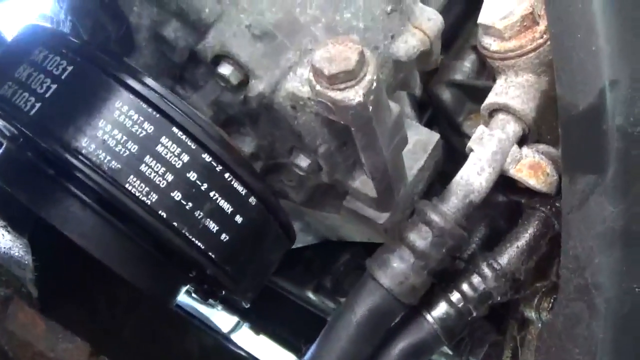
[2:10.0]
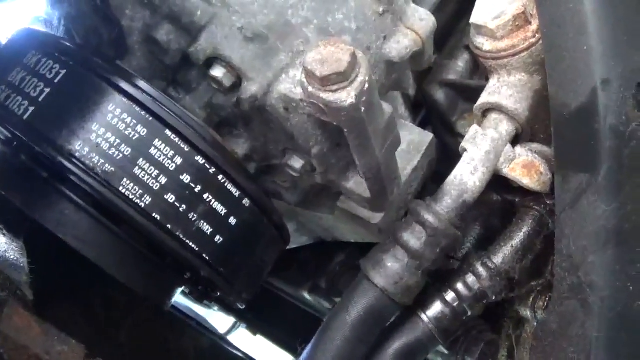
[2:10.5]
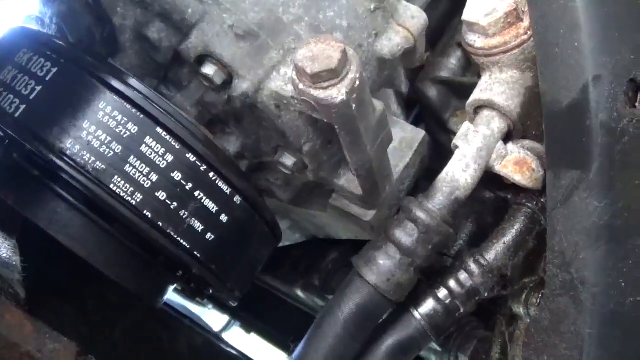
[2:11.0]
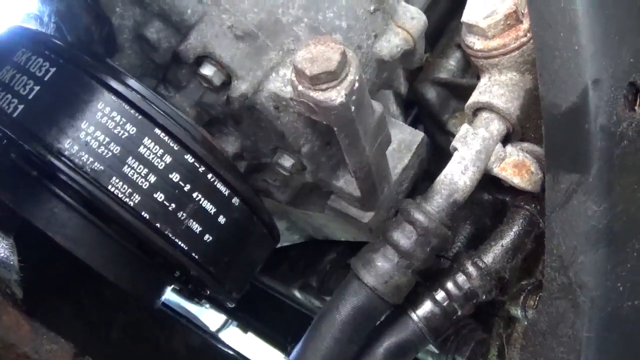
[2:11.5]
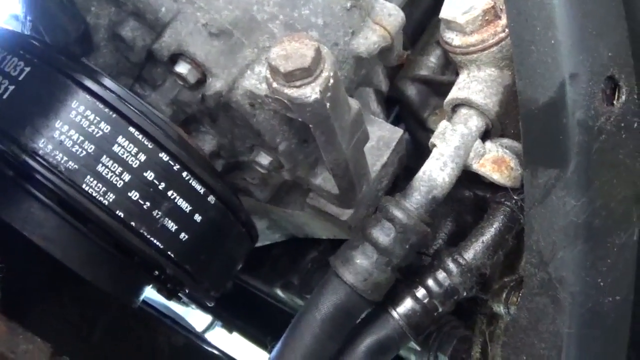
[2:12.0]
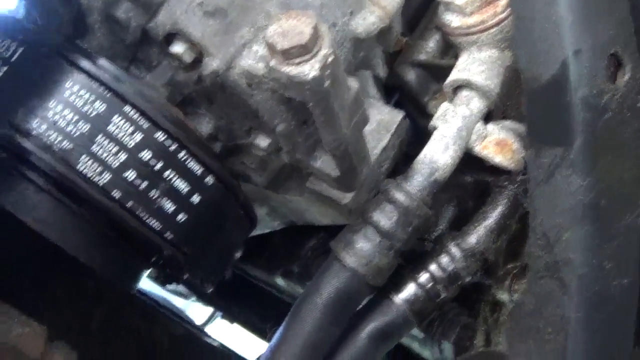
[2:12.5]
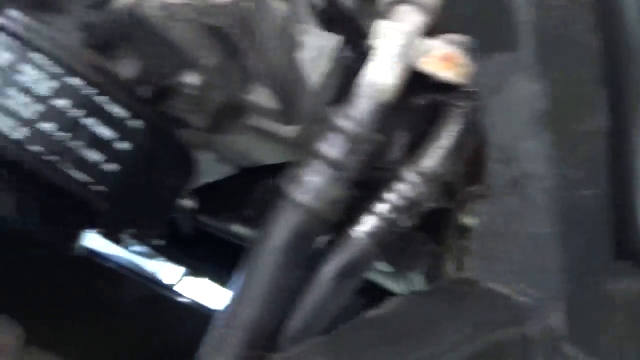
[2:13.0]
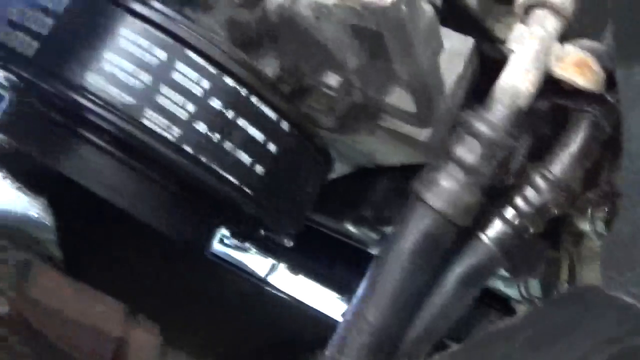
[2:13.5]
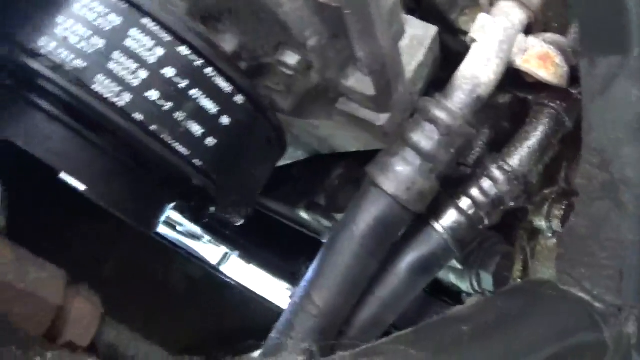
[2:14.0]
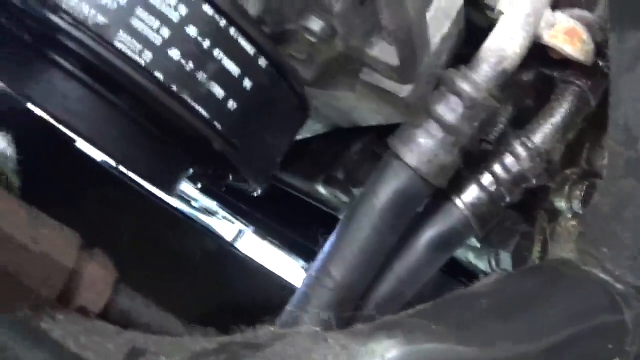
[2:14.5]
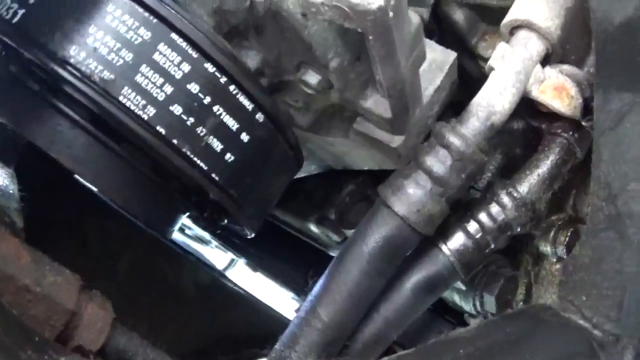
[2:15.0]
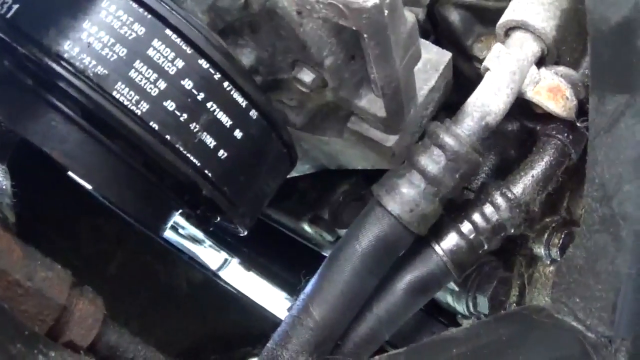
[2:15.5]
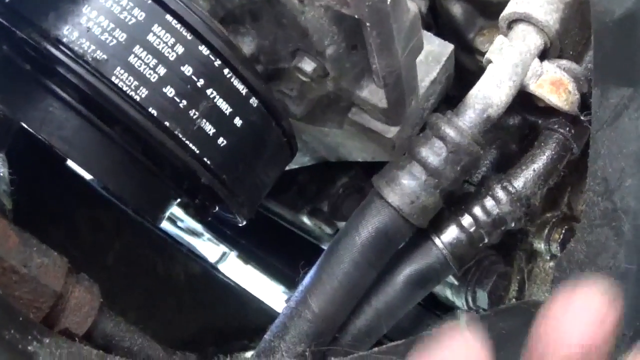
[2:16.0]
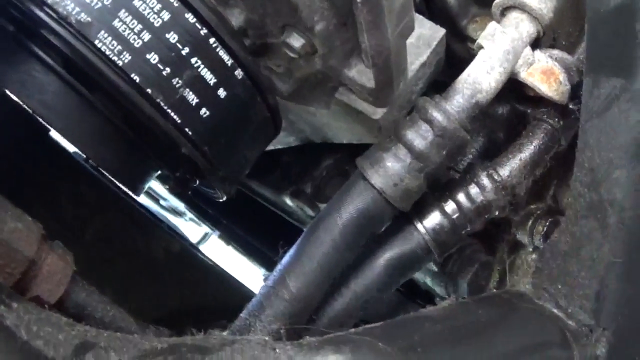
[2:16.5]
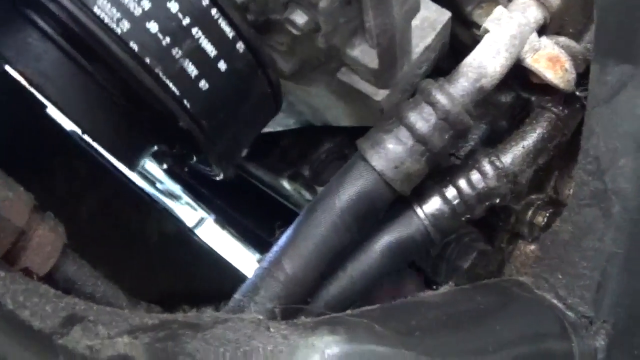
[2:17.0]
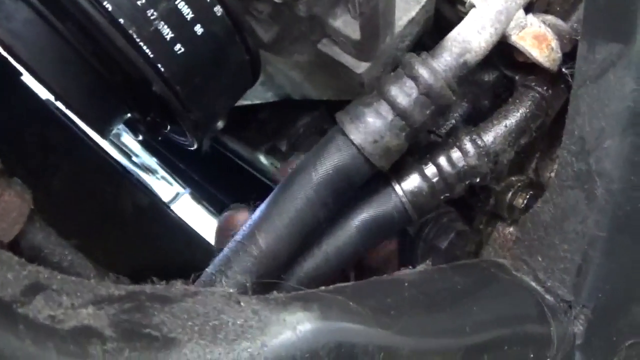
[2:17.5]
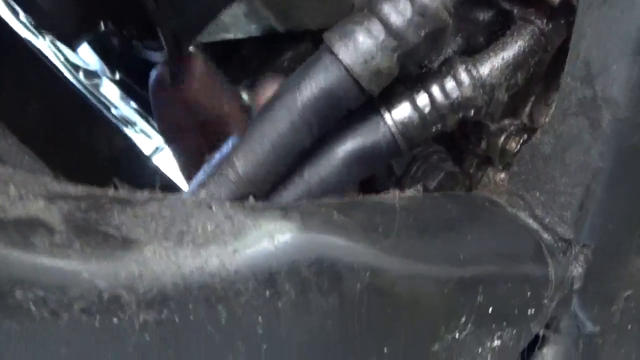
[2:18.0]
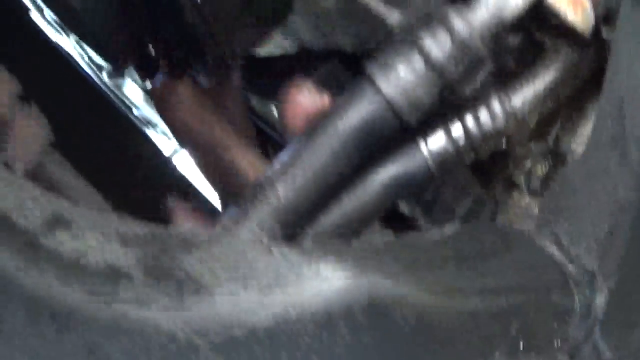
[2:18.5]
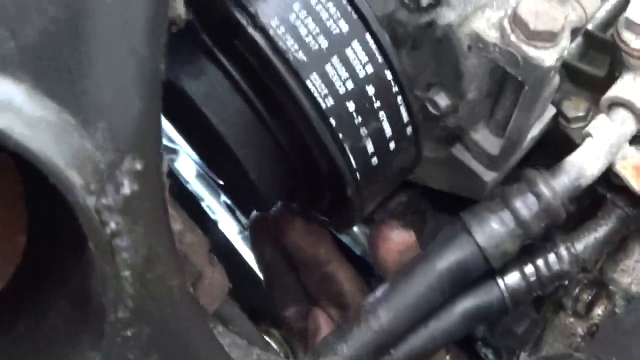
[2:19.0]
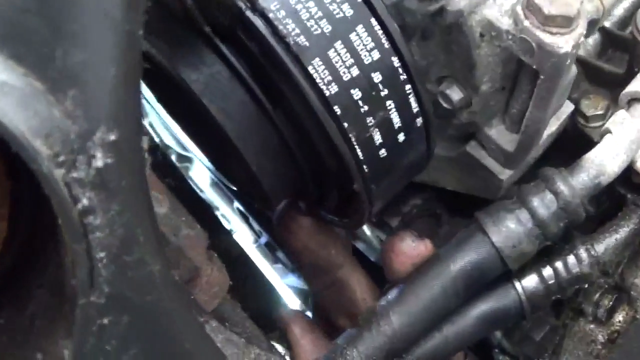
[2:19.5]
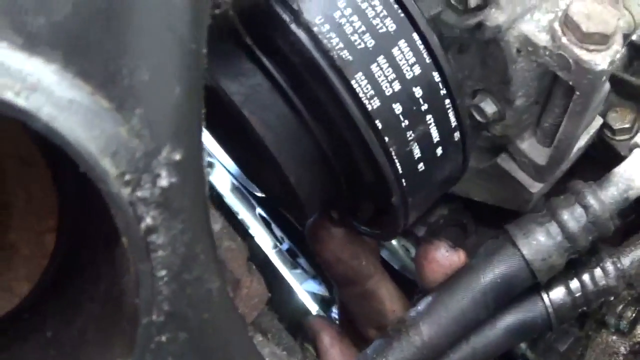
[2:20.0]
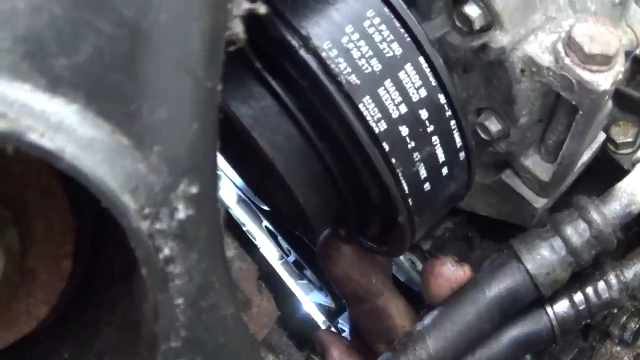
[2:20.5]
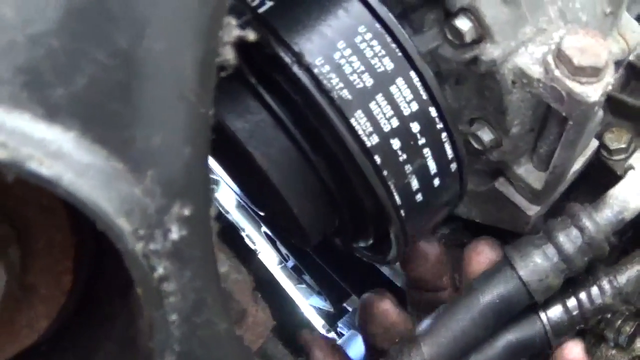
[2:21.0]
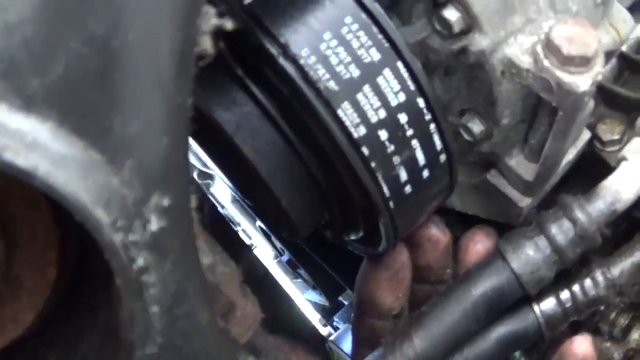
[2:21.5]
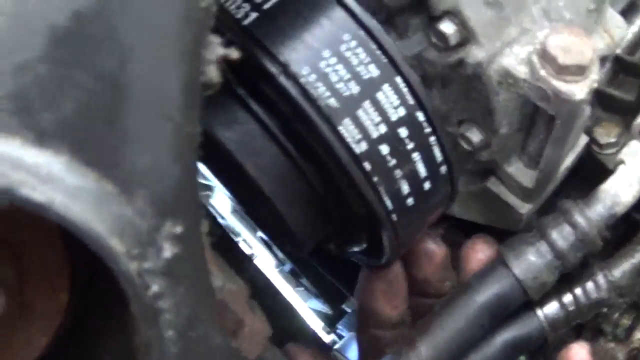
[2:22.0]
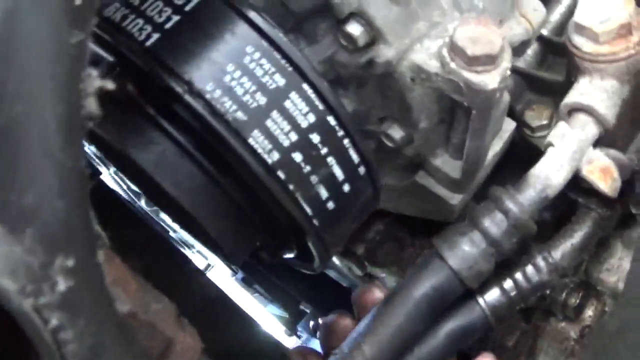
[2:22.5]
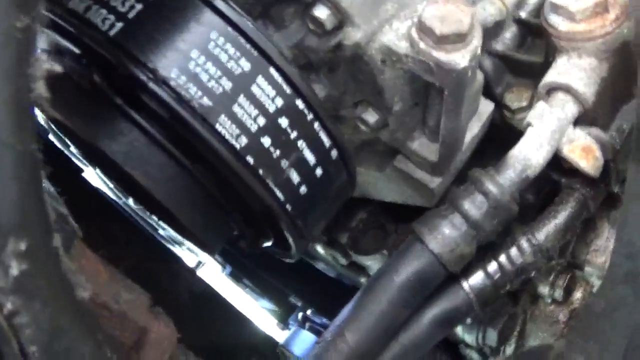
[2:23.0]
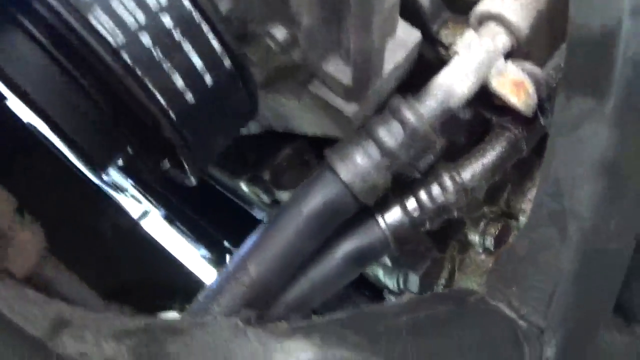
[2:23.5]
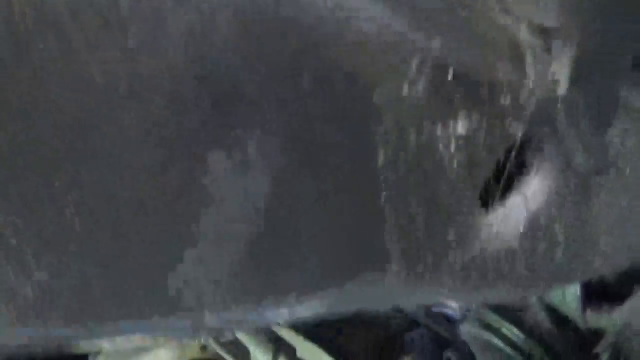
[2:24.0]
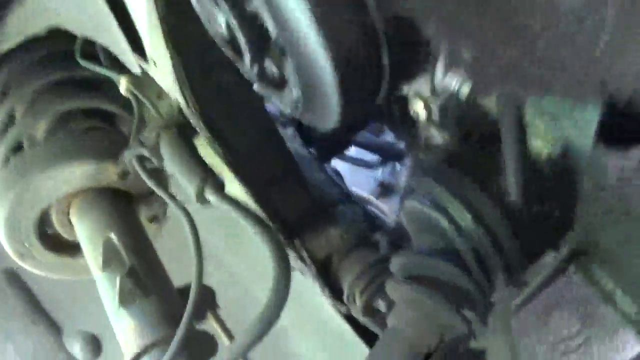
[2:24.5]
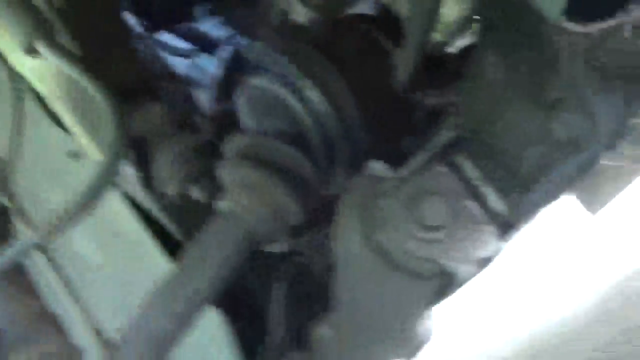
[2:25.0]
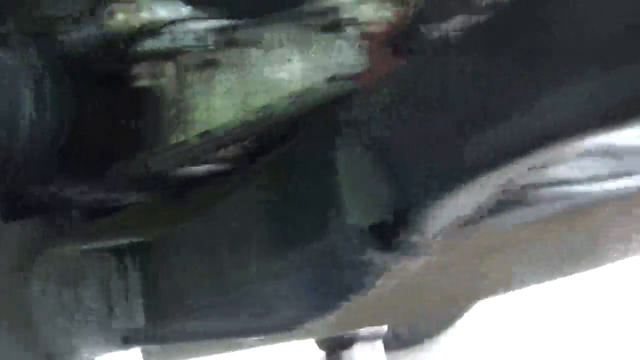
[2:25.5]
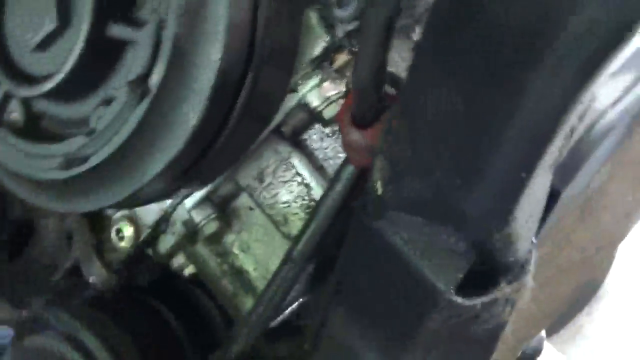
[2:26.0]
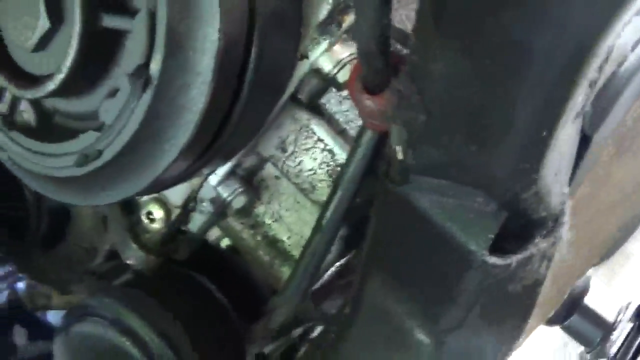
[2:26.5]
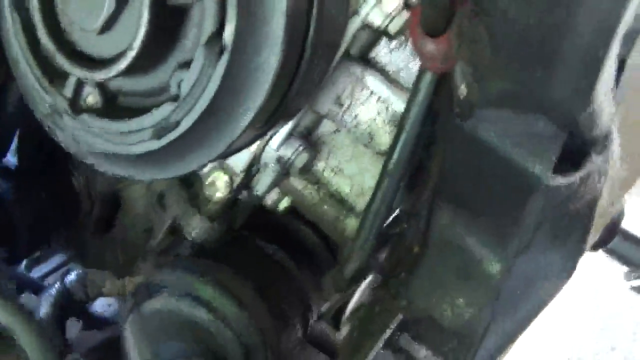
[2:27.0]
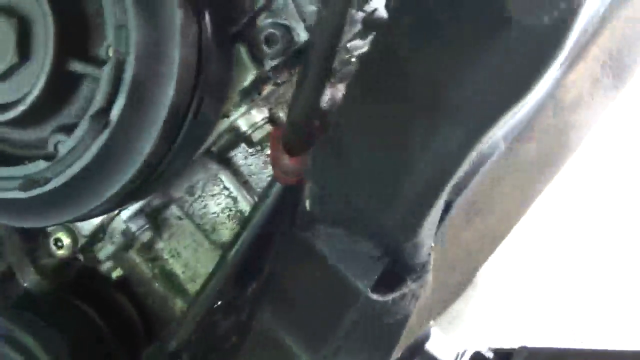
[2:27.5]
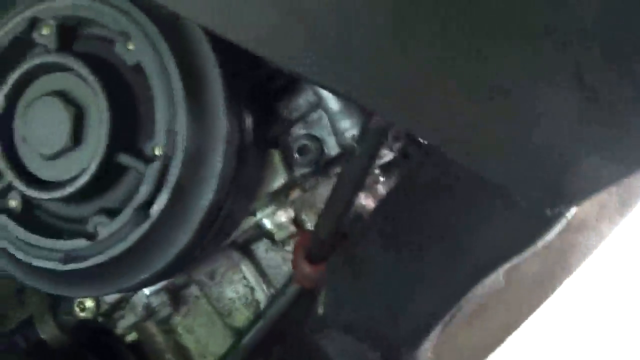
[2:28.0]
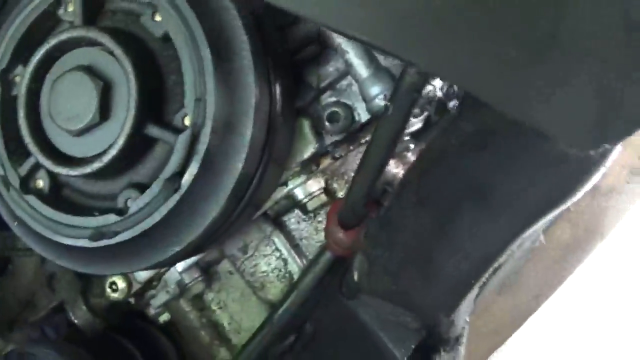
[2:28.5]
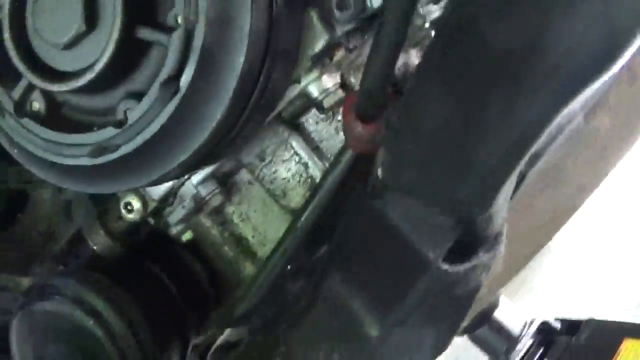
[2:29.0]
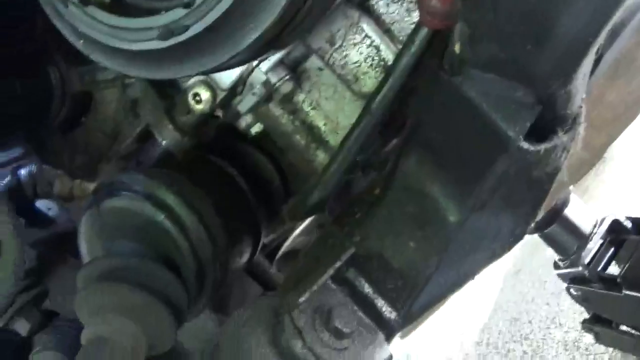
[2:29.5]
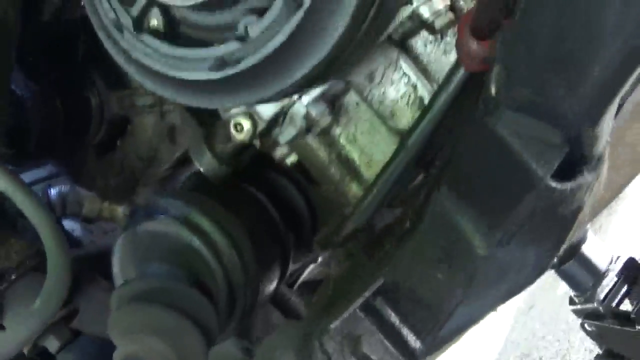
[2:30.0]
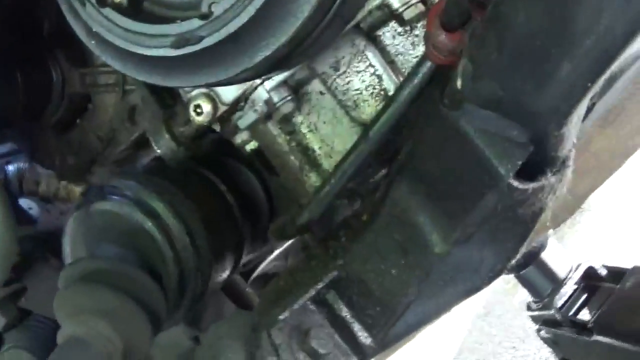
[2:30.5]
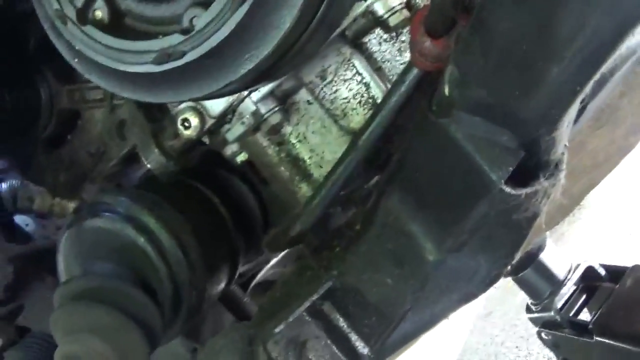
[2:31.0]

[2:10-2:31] The camera is zoomed in on a black belt attached to a motor drive. The belt has white text on it, some of it repeated, running along the length of the belt. Identification numbers are visible; one of them, in white, appears to be "6K1031". What appears to be maybe a US PAT number can barely be made out. There is text saying that the belt was made in Mexico, and other text reading "JD-2" followed by a space and "4716MX".